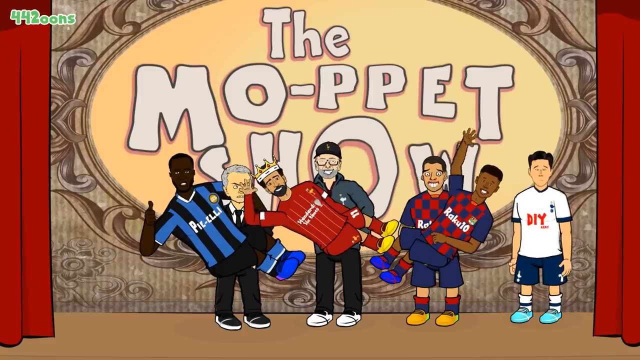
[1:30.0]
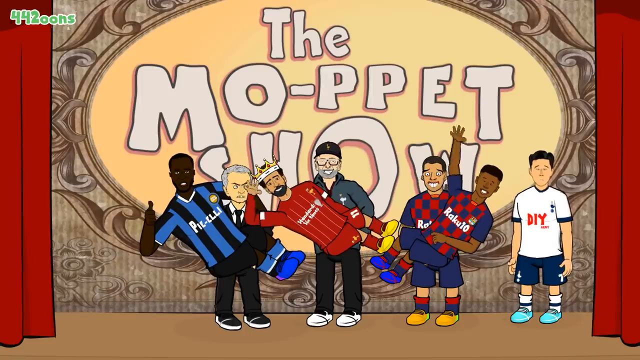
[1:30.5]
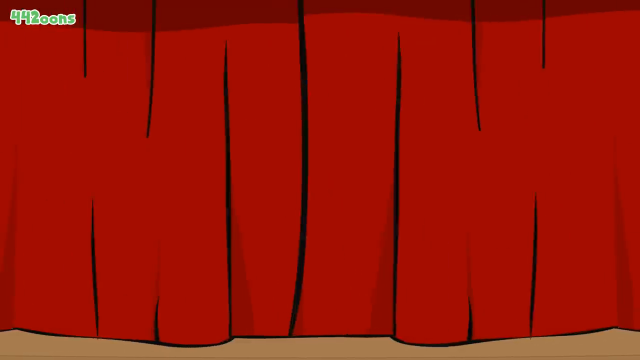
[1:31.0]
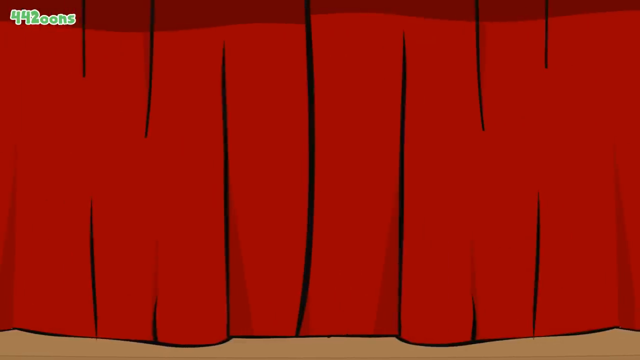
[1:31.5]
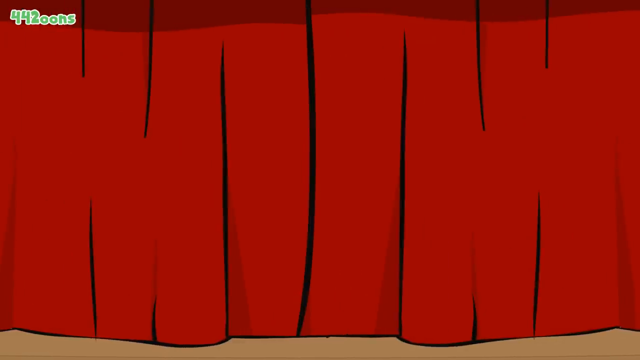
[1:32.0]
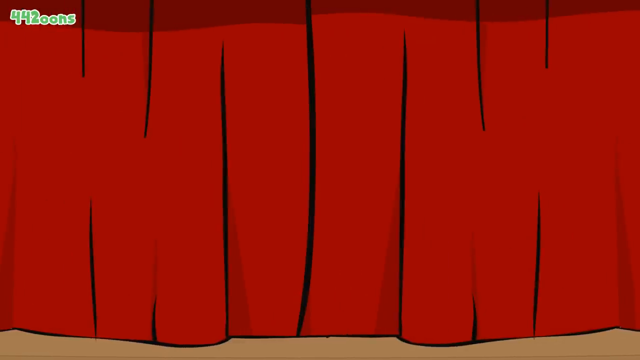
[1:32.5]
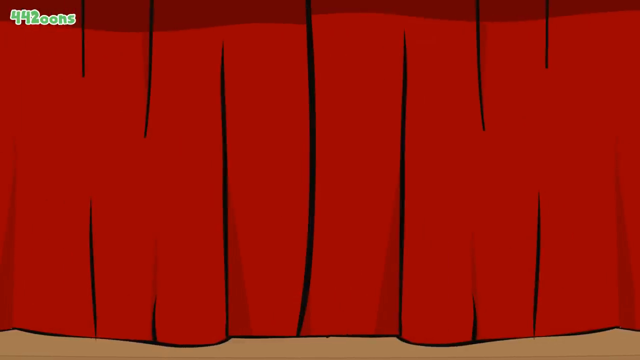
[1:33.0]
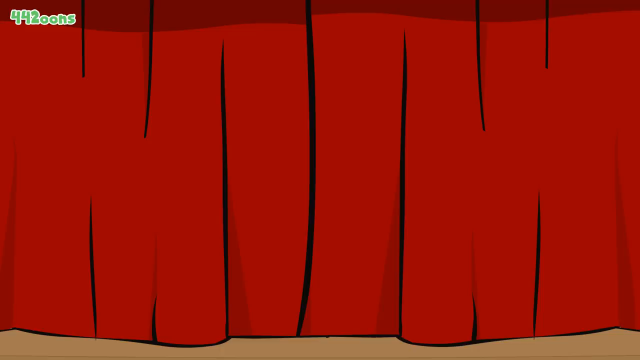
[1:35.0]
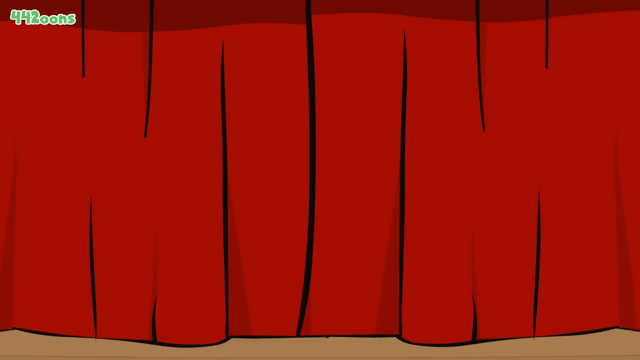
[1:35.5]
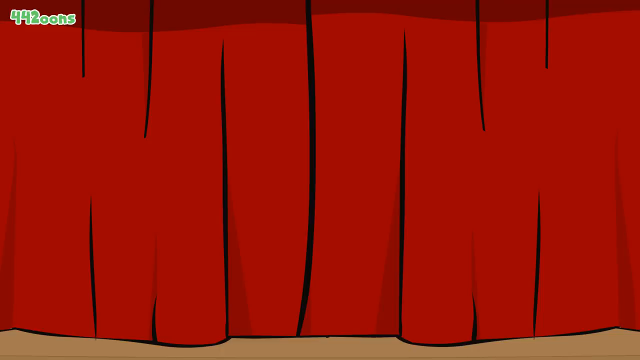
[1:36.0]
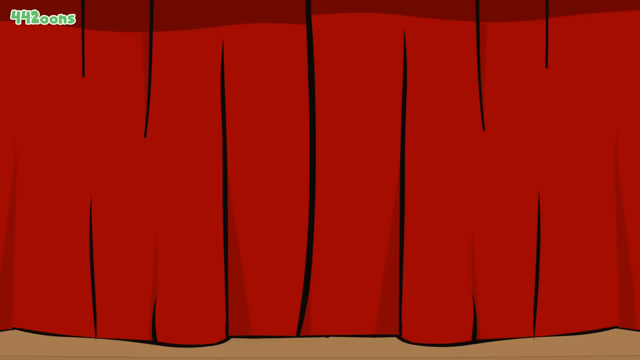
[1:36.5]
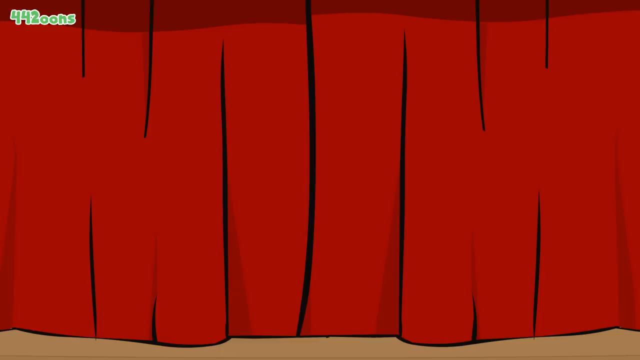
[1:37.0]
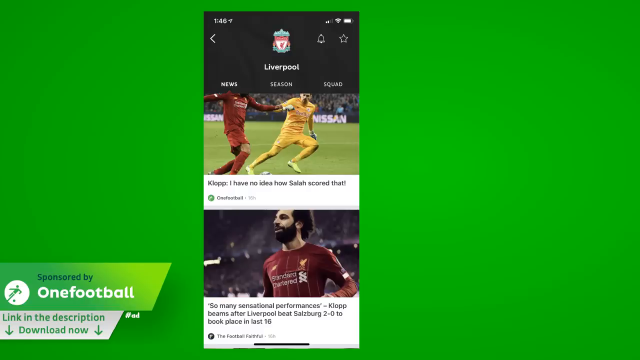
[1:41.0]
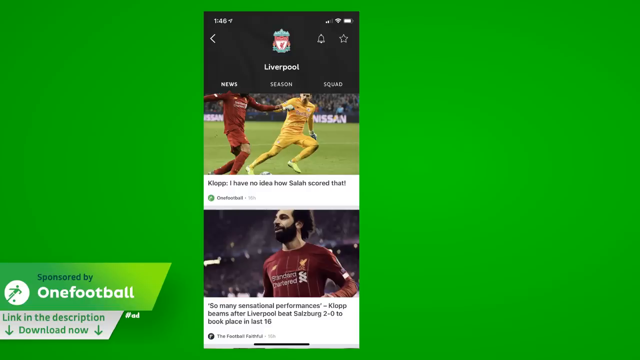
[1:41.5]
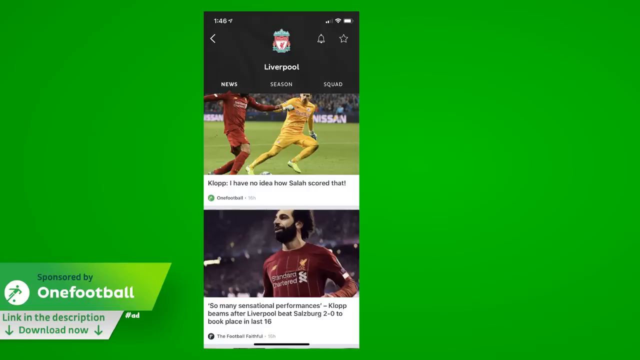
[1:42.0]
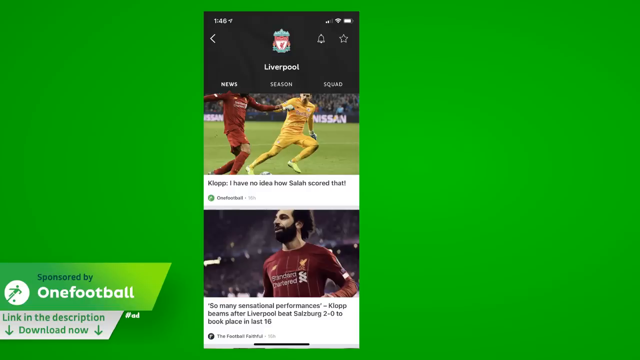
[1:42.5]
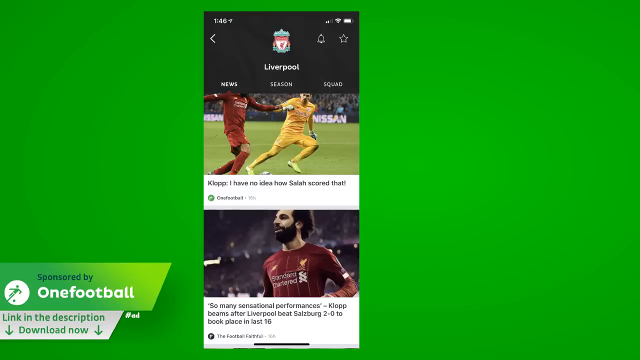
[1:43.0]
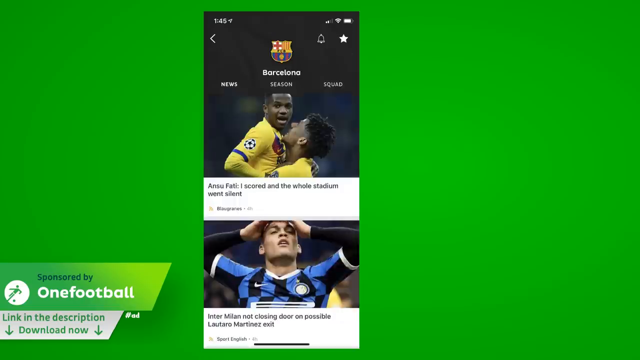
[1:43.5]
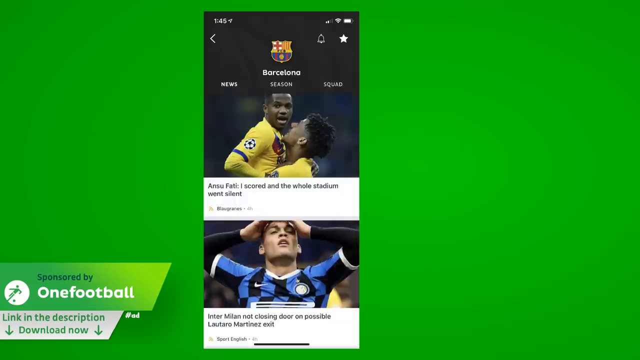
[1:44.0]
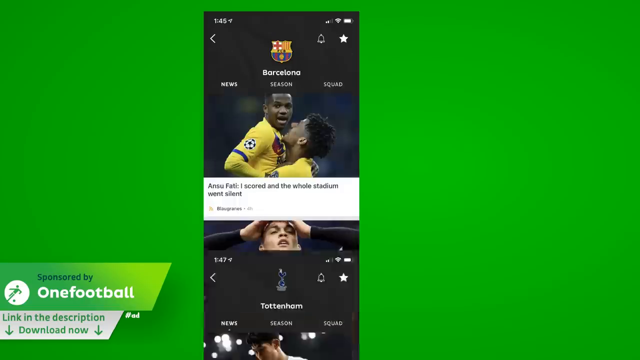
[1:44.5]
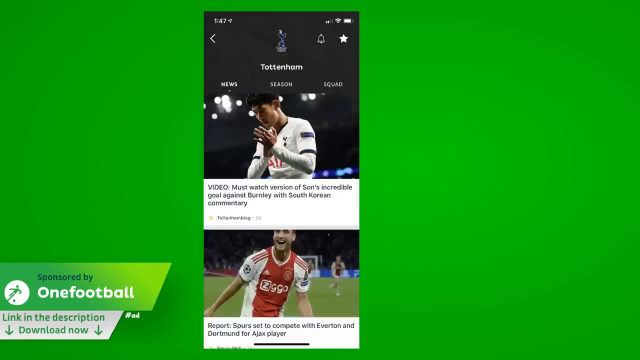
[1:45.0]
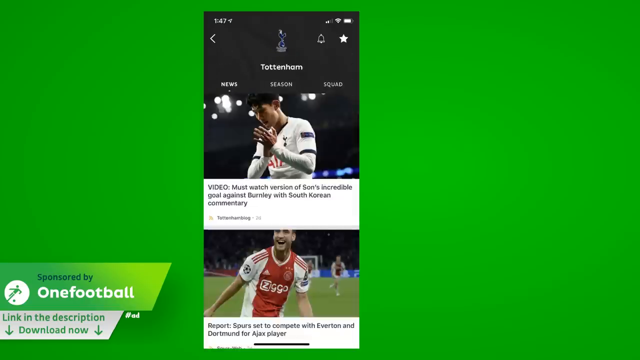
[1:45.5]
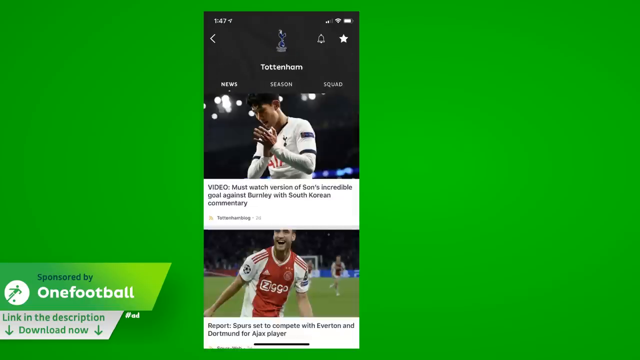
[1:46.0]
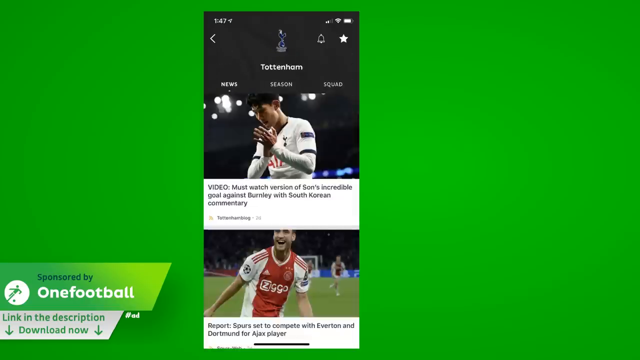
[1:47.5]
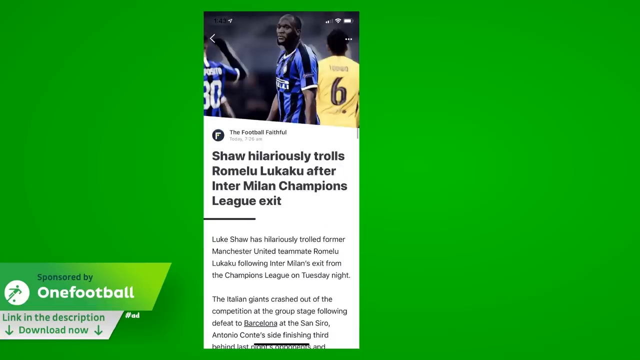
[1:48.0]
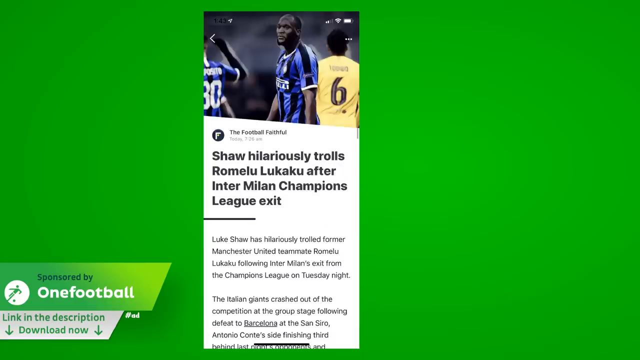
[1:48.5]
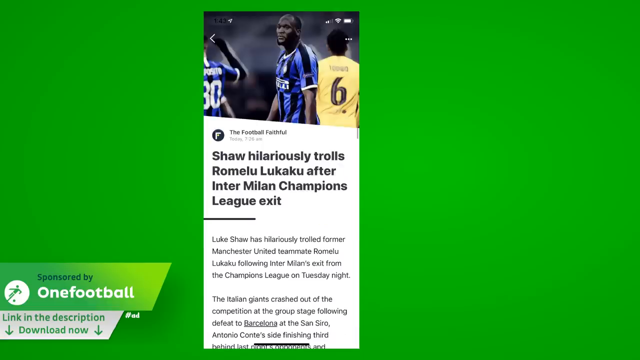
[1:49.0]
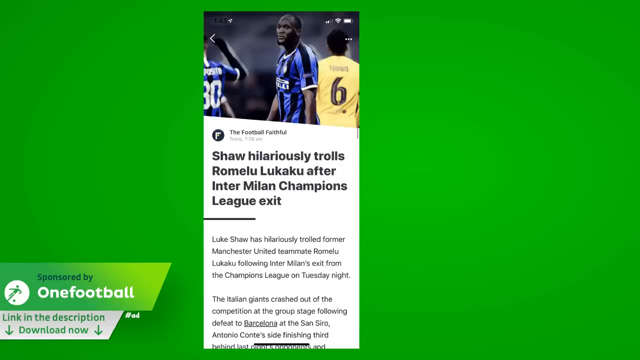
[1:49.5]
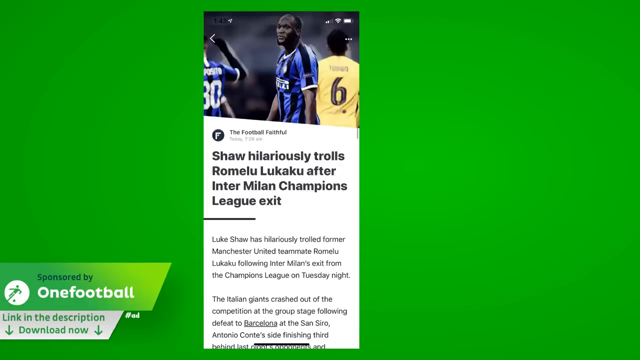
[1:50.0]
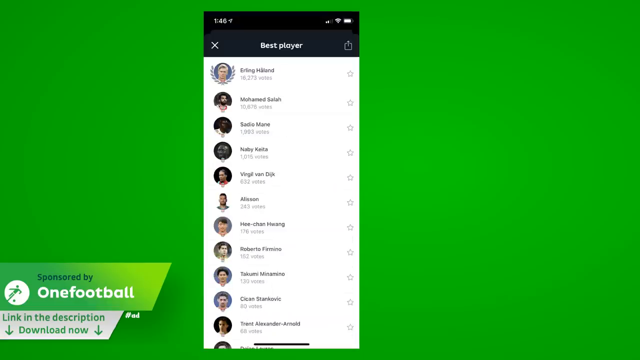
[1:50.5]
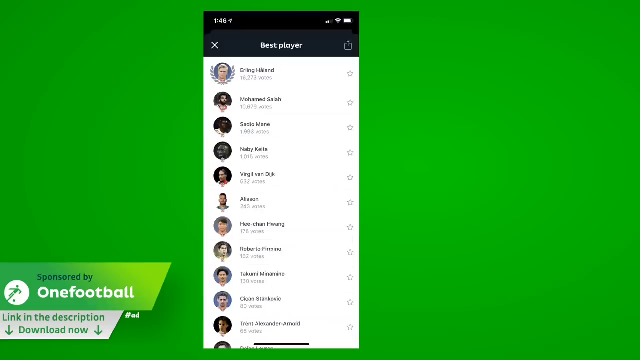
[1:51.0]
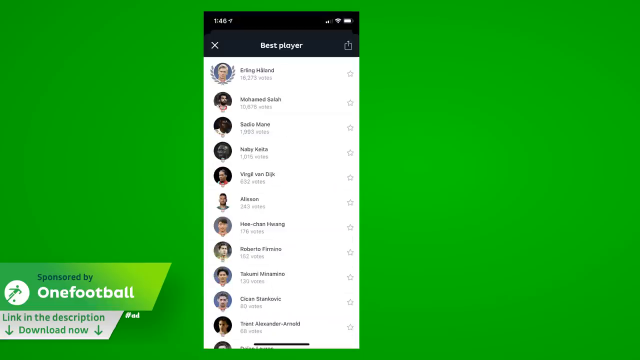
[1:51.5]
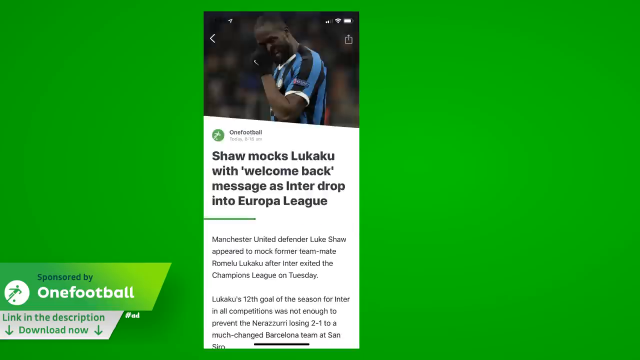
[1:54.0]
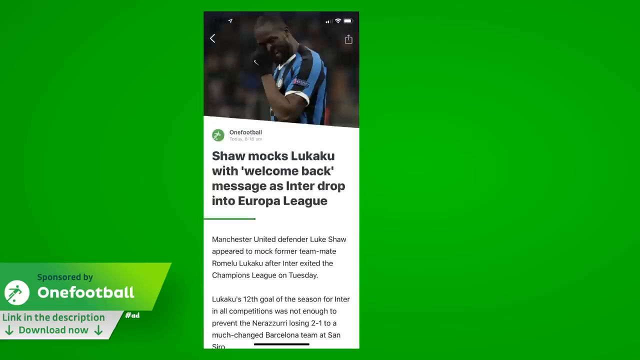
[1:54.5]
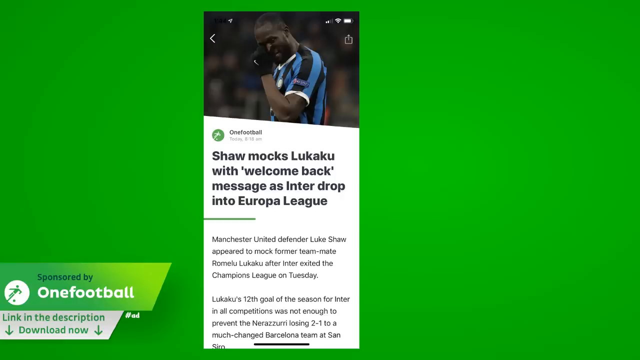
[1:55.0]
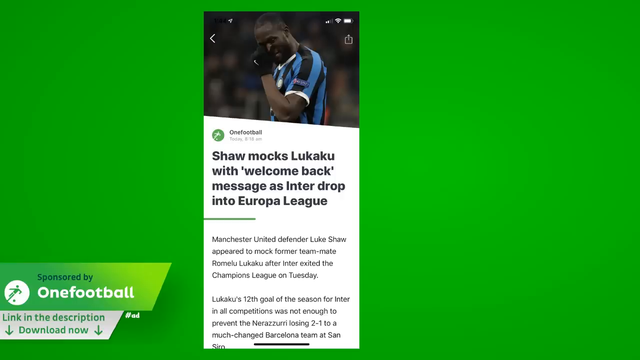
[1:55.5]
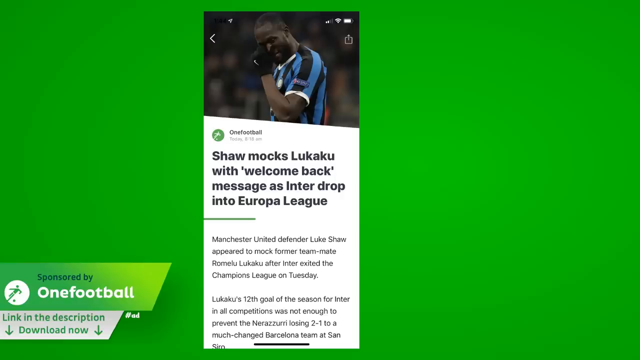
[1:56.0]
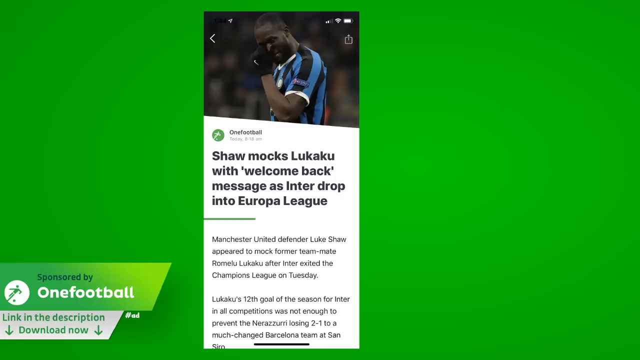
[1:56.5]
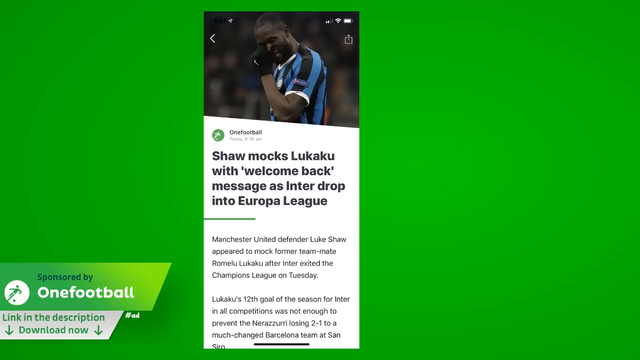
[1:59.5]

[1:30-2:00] Characters from the TV show stand on a theater stage, smiling and waving, apparently at the audience. Behind them is a seemingly off-white sign that says "the mo-pped show." Red curtains close in front of them, and the video stays on the red curtains for a few seconds. The video then shows a screen recording of someone scrolling on a website with a green background that has multiple pictures of real-life soccer players. The person seems to scroll a lot before eventually clicking on one picture. The video ends on an article about someone named Shaw mocking Lukaku with a "welcome back" message as Inter drop into the Europa League.